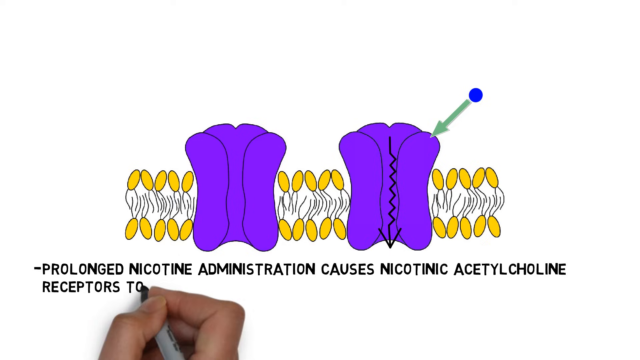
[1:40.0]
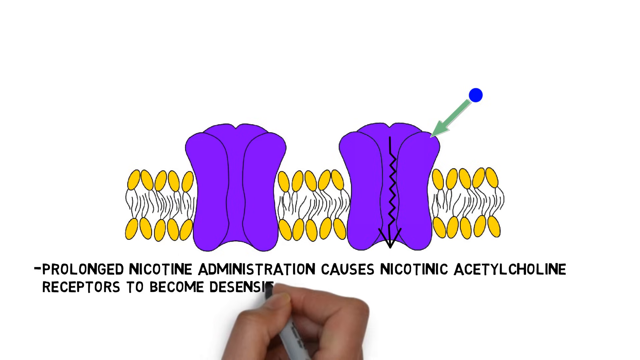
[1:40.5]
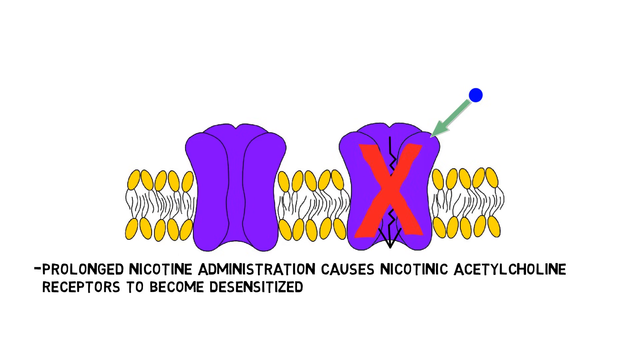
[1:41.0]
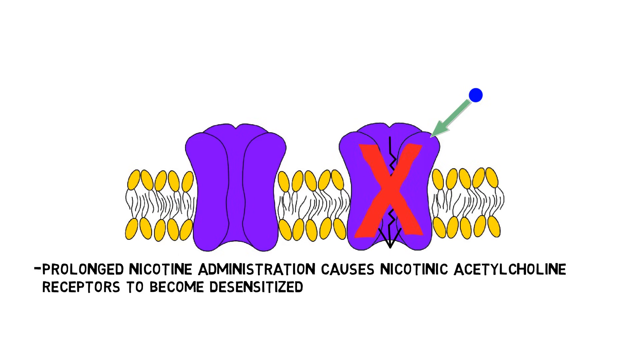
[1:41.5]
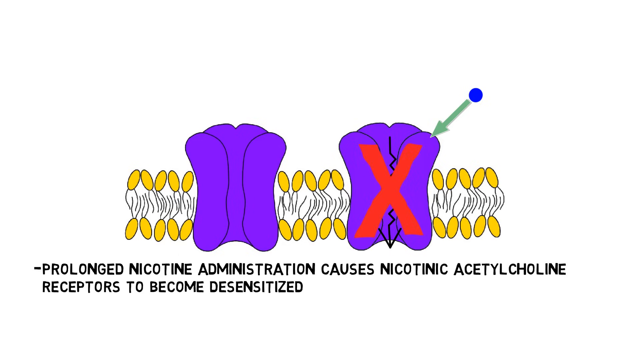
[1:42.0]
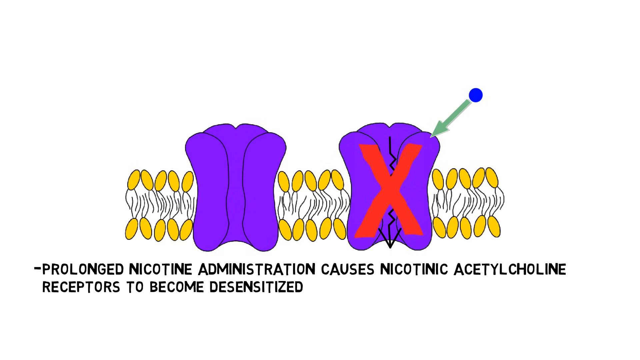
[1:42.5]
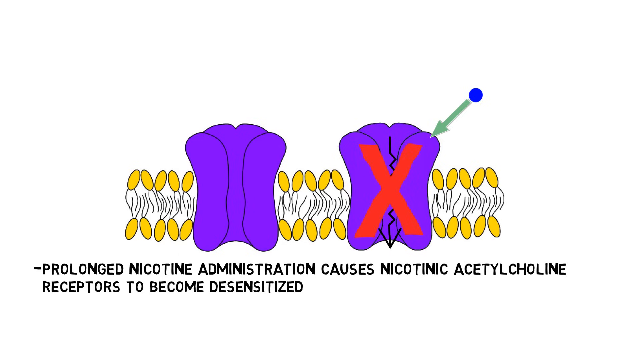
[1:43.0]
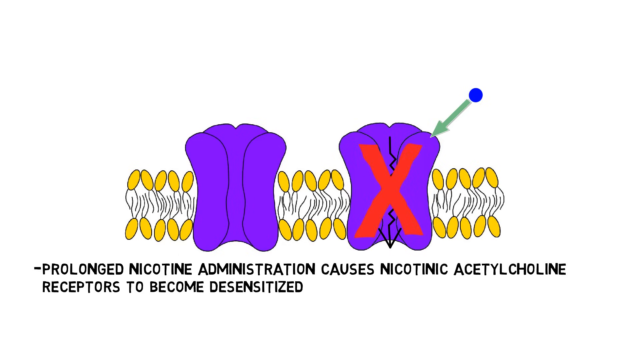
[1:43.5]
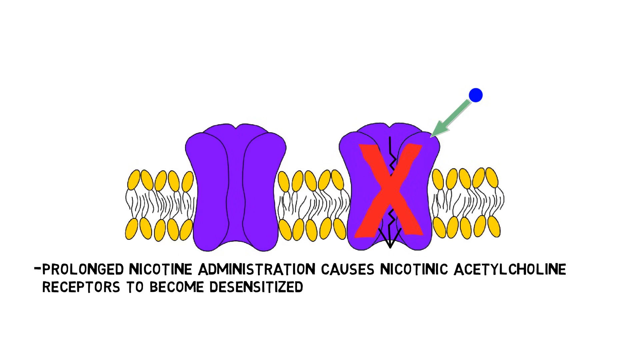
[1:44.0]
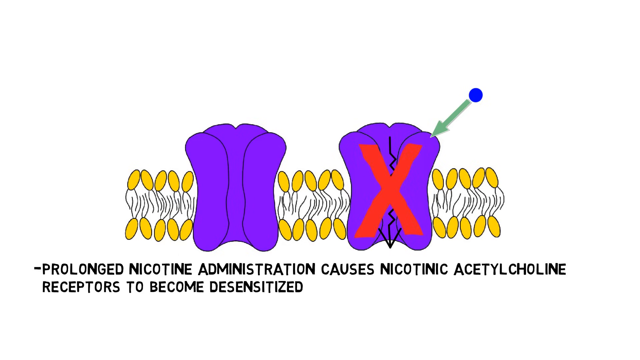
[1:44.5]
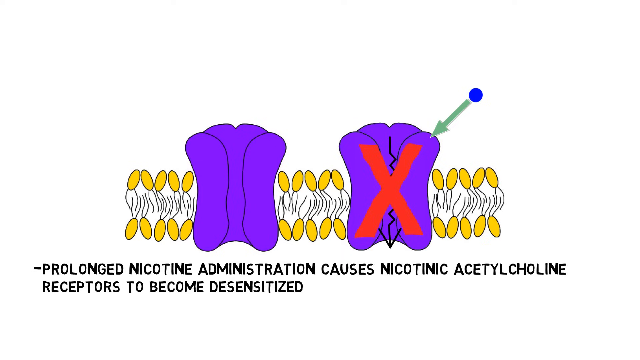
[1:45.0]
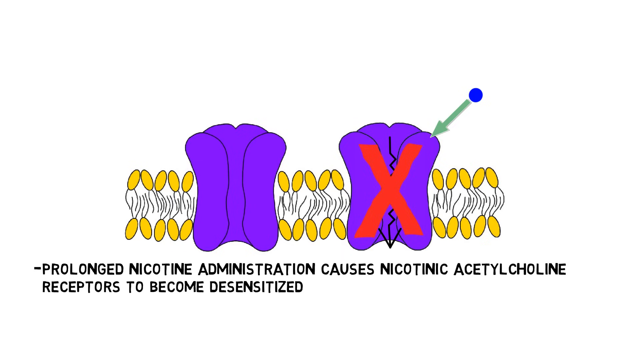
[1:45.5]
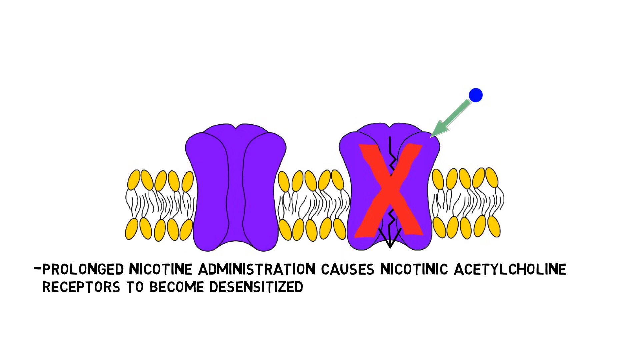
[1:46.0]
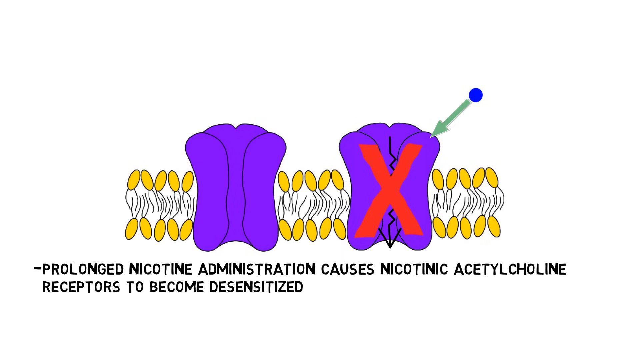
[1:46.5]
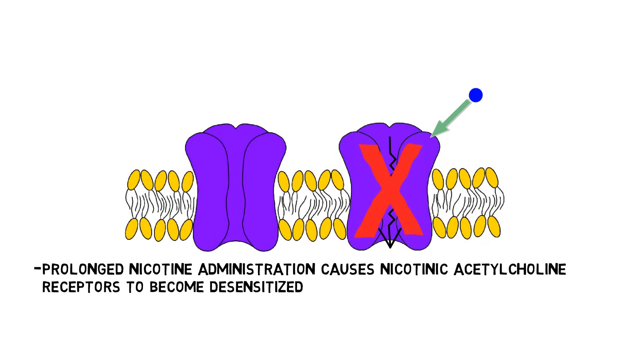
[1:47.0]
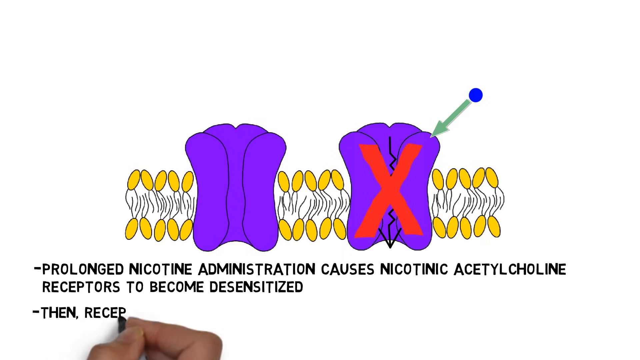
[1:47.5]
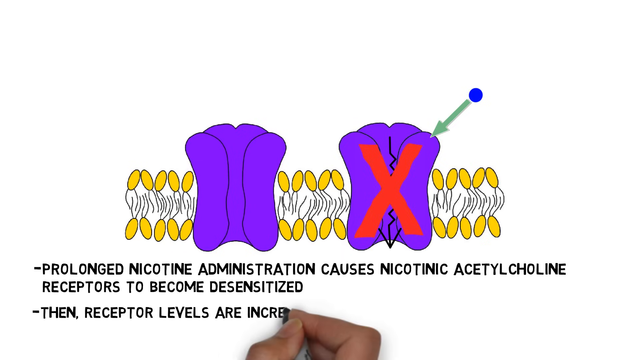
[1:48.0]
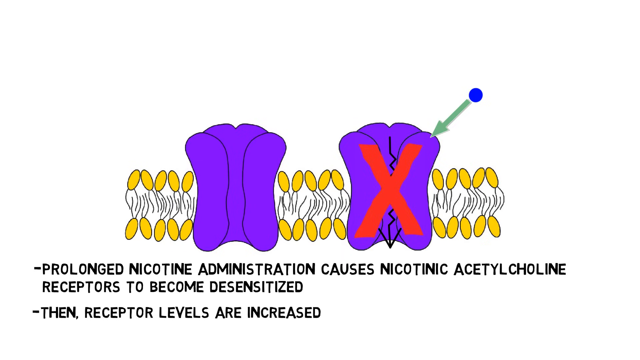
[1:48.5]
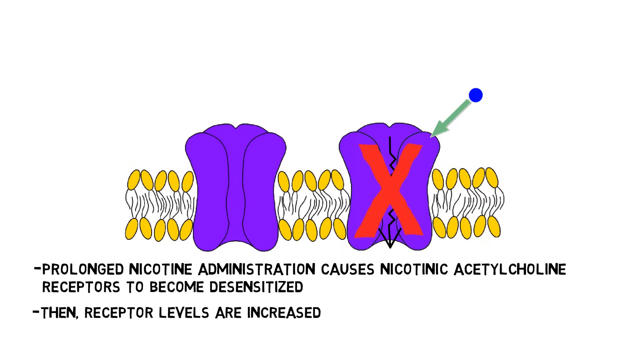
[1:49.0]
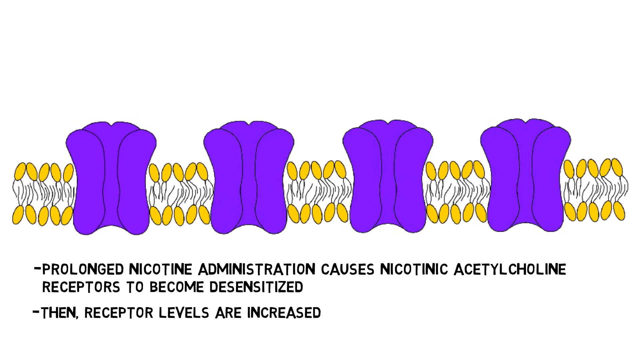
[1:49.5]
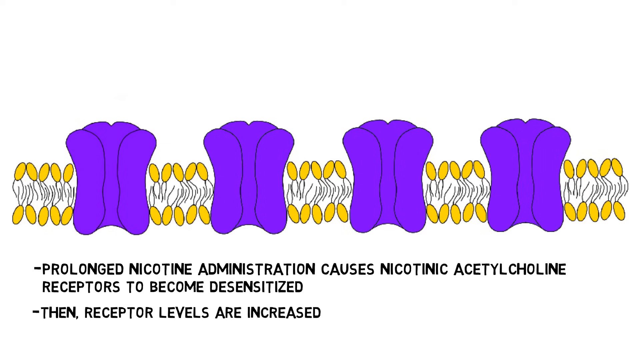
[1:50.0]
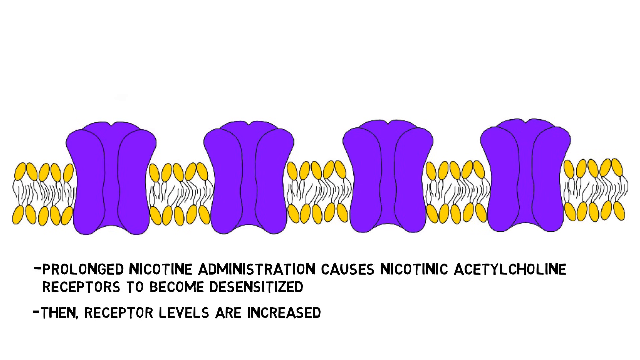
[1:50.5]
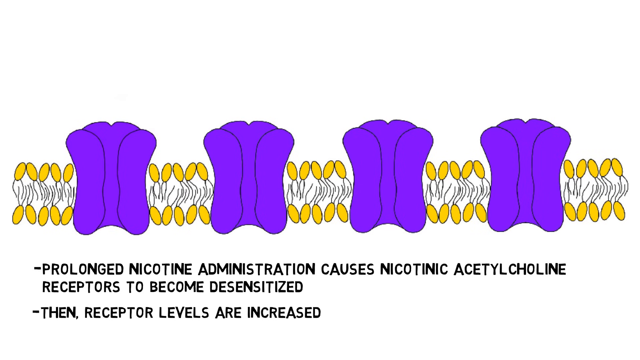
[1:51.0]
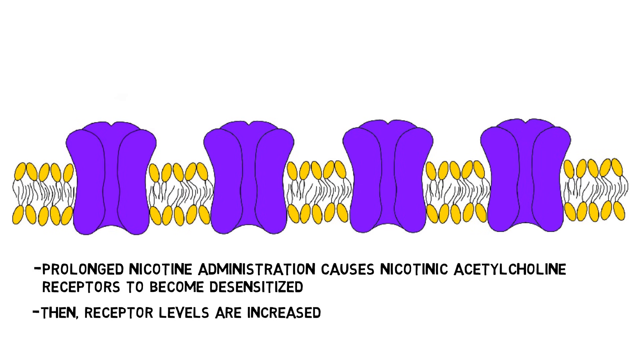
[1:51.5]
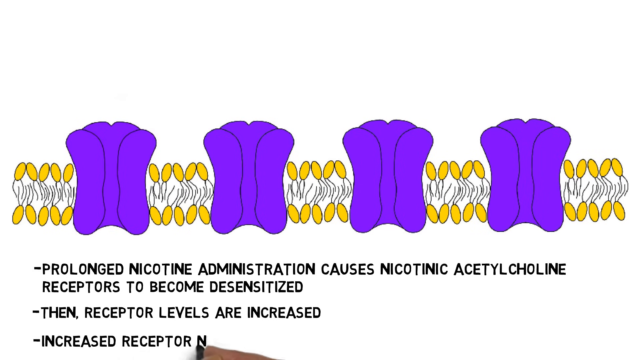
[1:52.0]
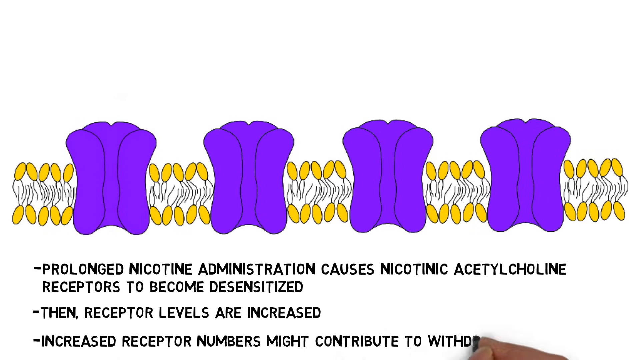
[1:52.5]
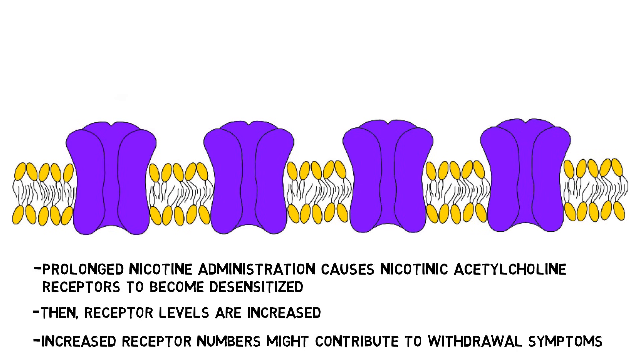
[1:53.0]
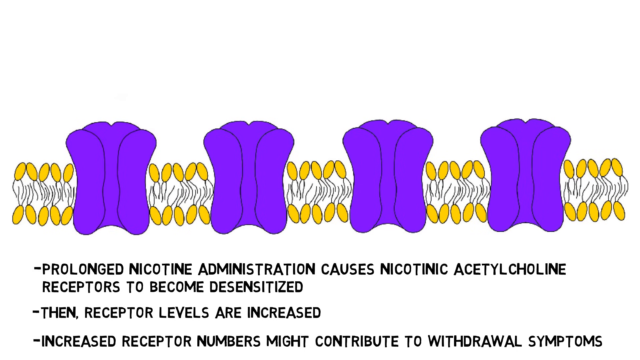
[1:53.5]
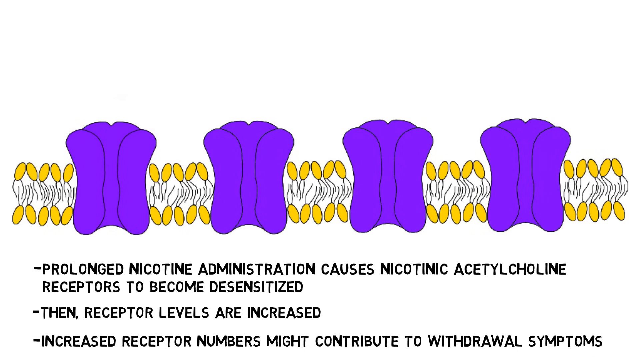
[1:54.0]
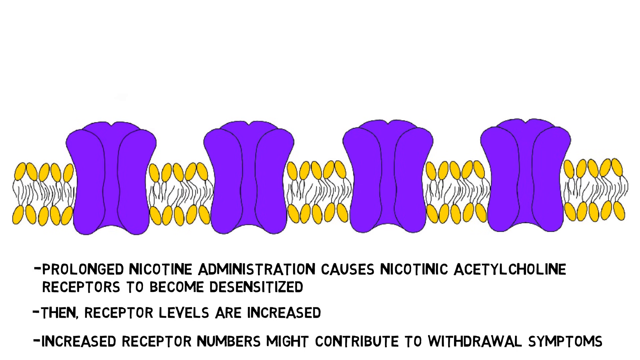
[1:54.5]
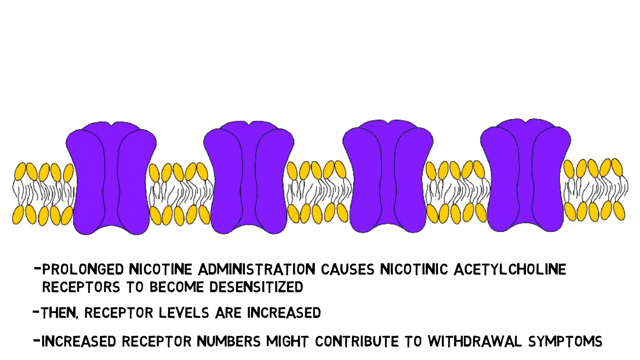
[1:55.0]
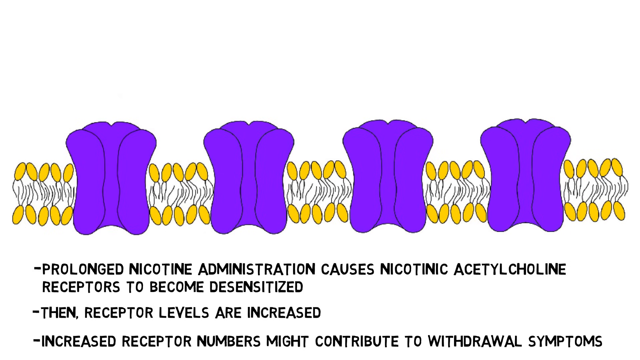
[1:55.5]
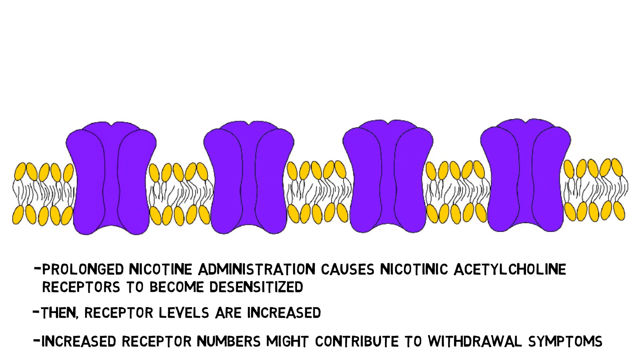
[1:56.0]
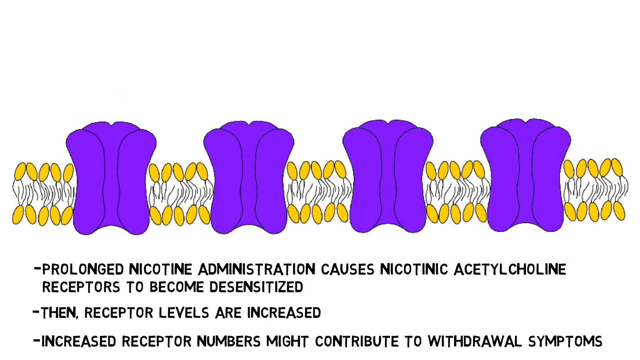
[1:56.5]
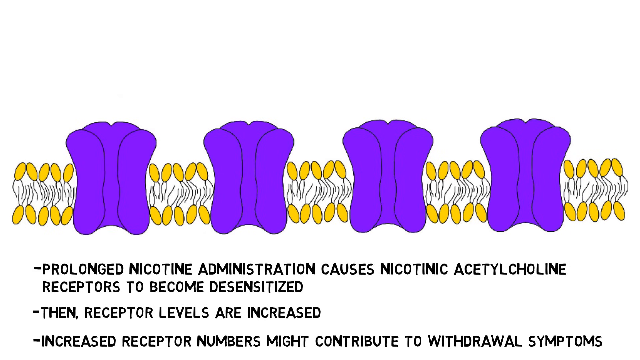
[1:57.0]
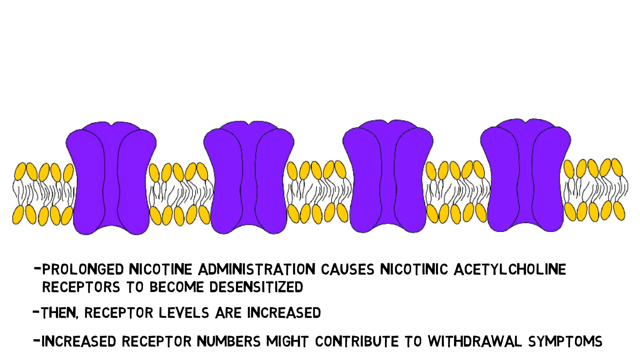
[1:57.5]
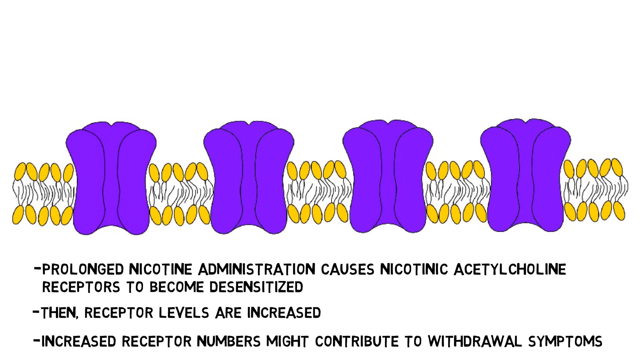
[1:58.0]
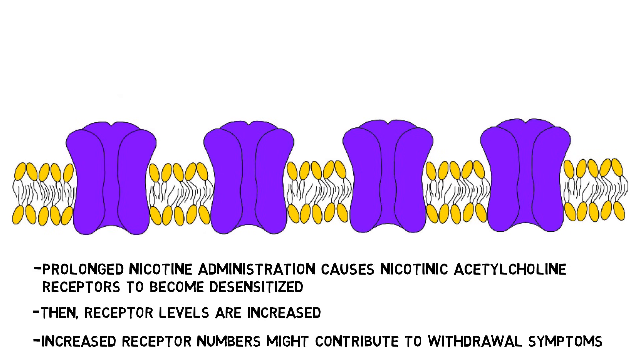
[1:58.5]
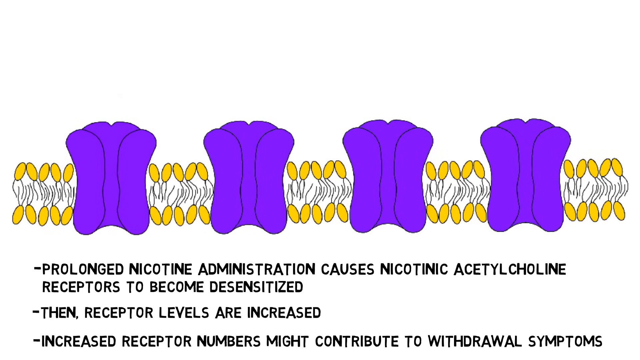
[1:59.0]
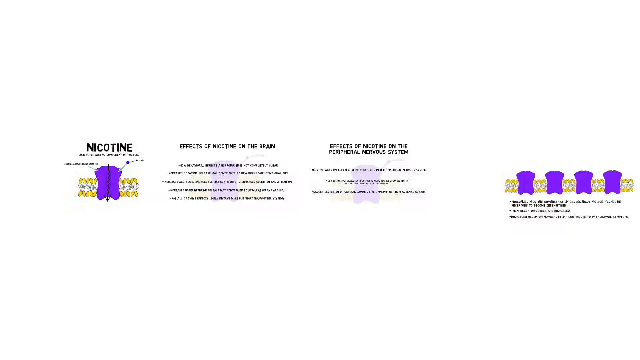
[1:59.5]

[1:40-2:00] The screen has a white background with the diagram: two purple hot-dog-shaped images are in the middle, with yellow ovals with tails on either side and in between them, in two rows. The blue circle toward the right is still aimed at the purple object on the right side, with a green arrow connecting the two. The black, downward-pointing arrow with a jagged stem is still on top of the purple object on the right. The hand holding a pen writes two bullet points: "prolonged nicotine administration causes nicotinic acetylcholine receptors to become desensitized" and a second that apparently ends "receptor levels are increased". The screen then shifts to another screen with a white background, where there are four purple objects, with no arrows on top of them and the blue circle missing; the two bullet points remain the same underneath them.